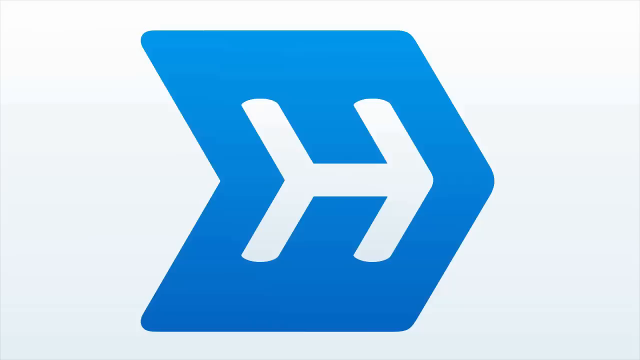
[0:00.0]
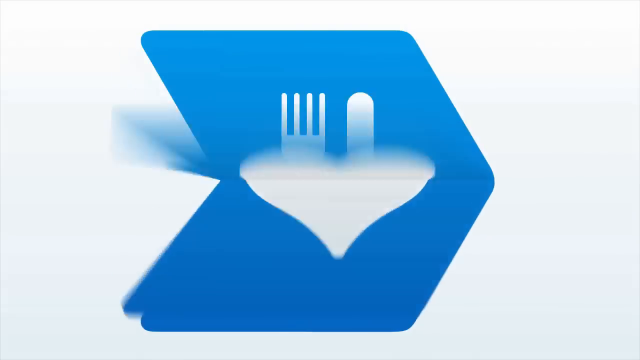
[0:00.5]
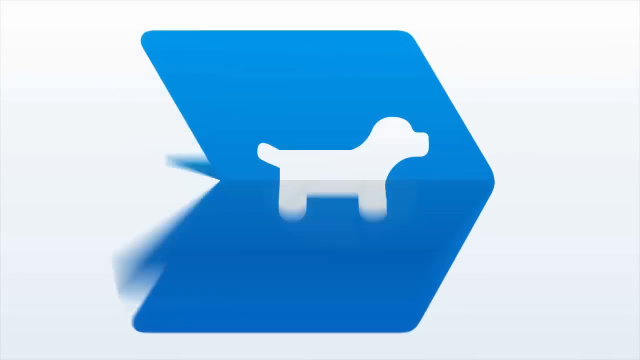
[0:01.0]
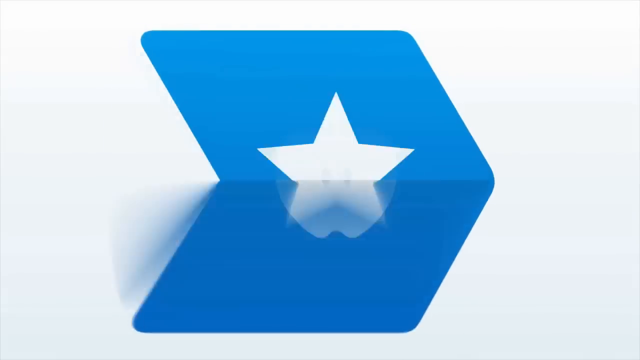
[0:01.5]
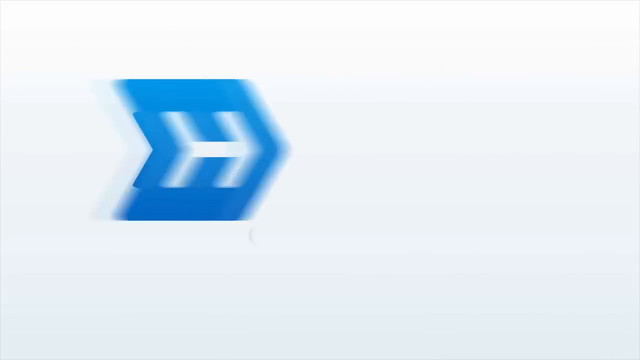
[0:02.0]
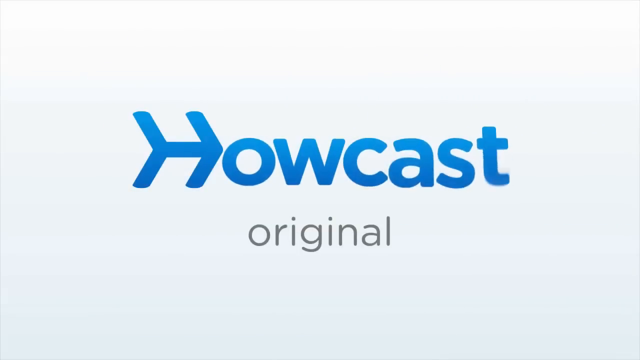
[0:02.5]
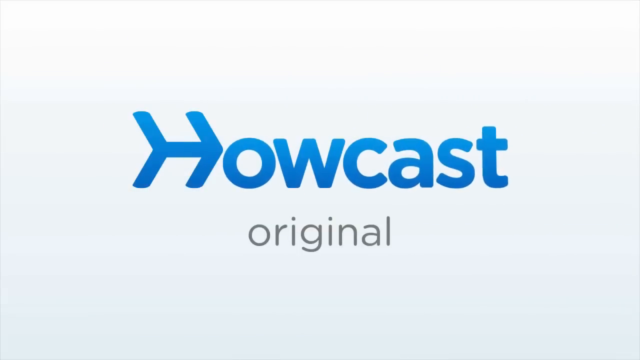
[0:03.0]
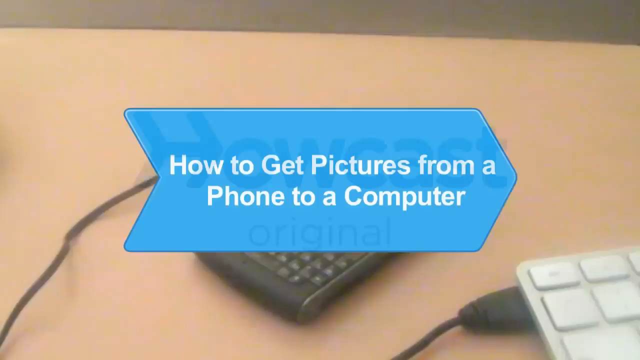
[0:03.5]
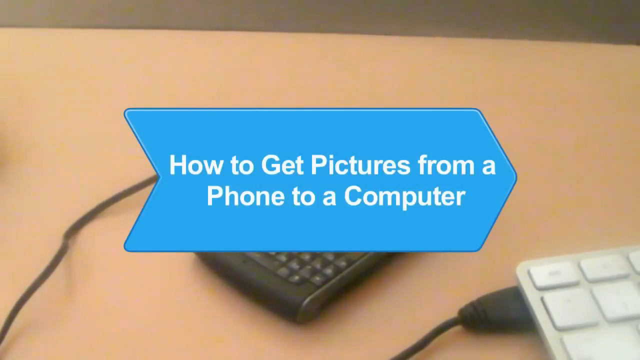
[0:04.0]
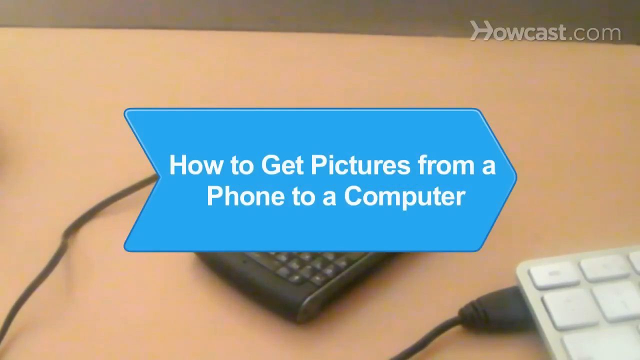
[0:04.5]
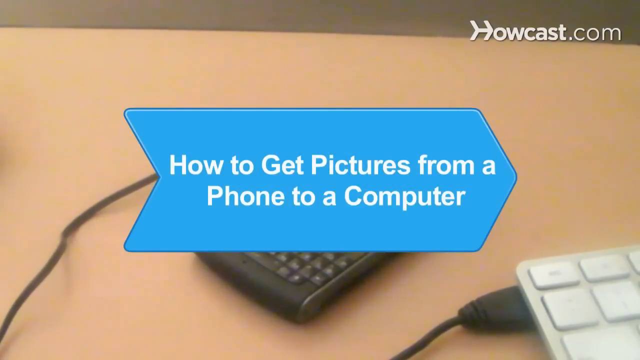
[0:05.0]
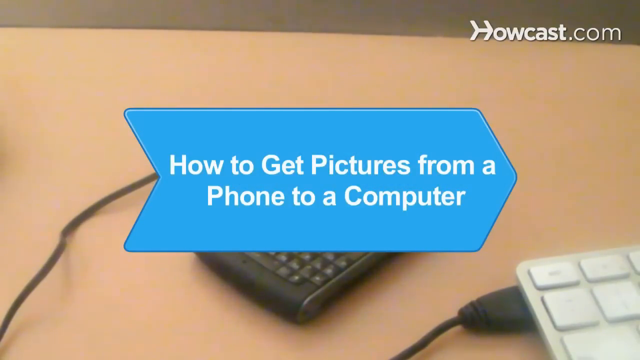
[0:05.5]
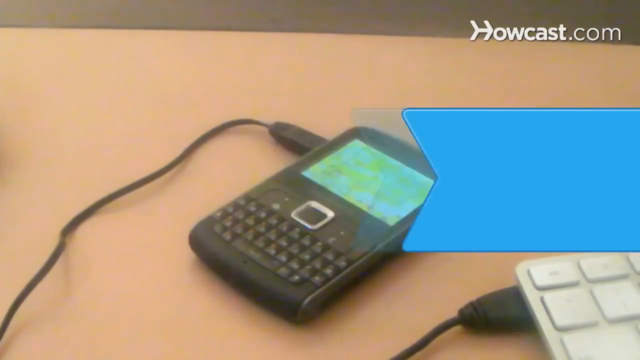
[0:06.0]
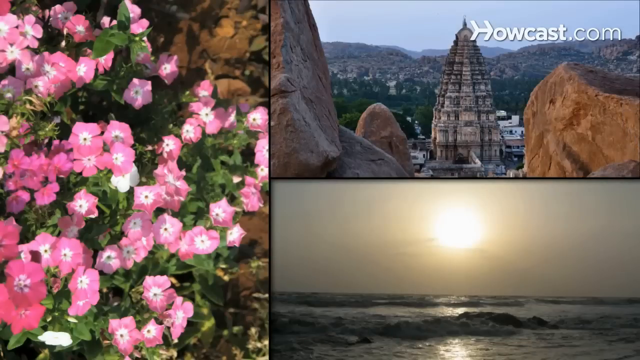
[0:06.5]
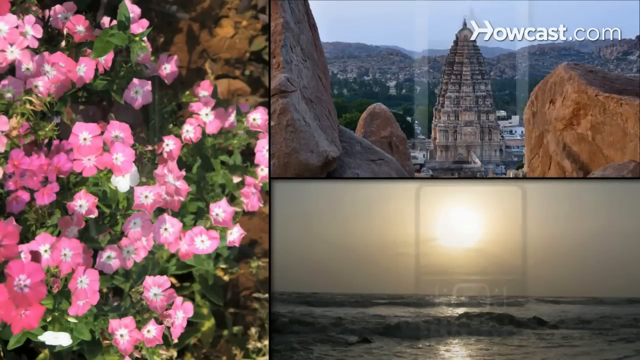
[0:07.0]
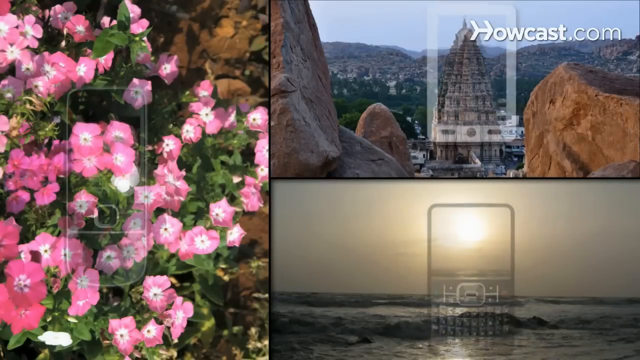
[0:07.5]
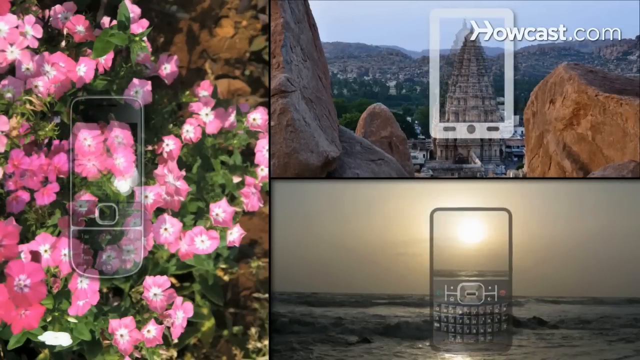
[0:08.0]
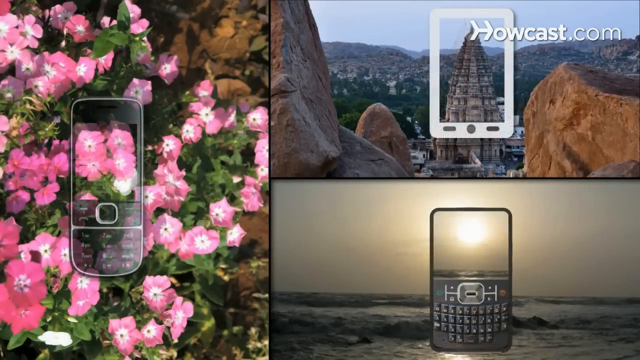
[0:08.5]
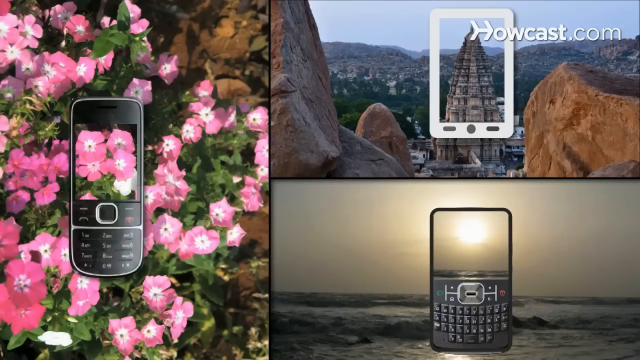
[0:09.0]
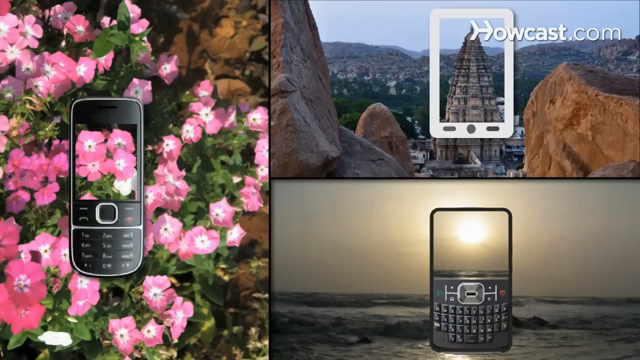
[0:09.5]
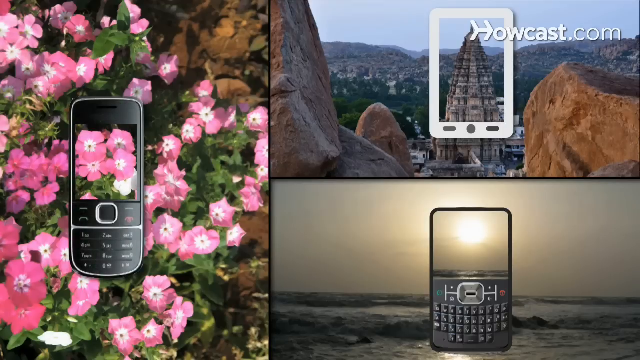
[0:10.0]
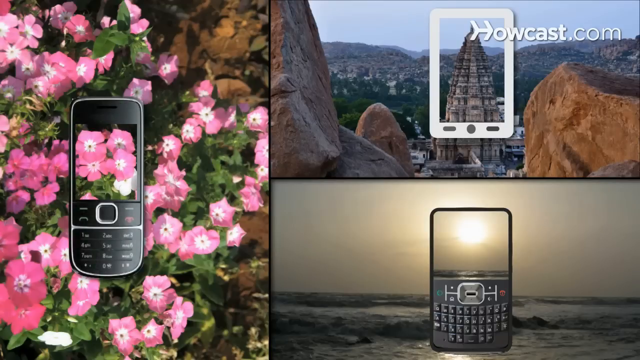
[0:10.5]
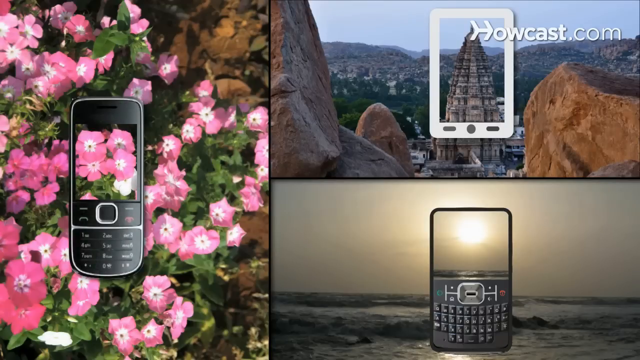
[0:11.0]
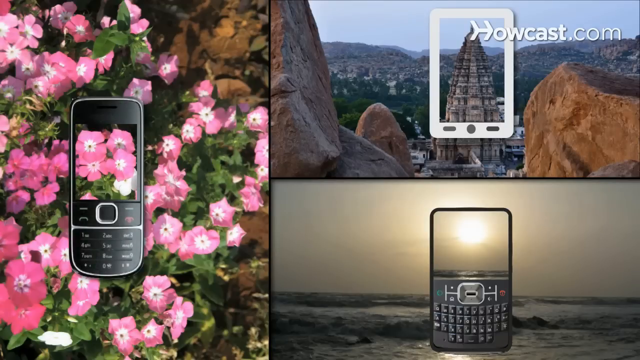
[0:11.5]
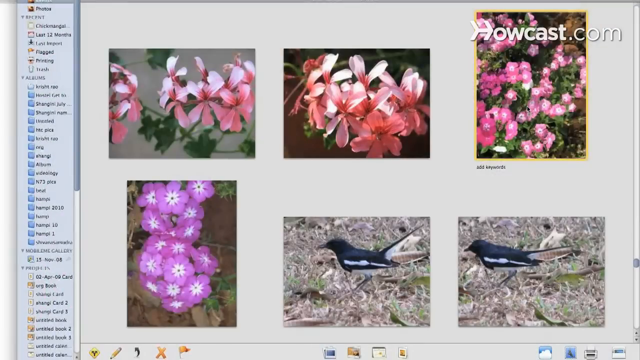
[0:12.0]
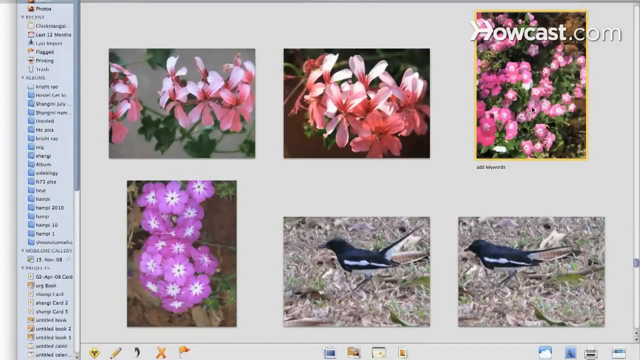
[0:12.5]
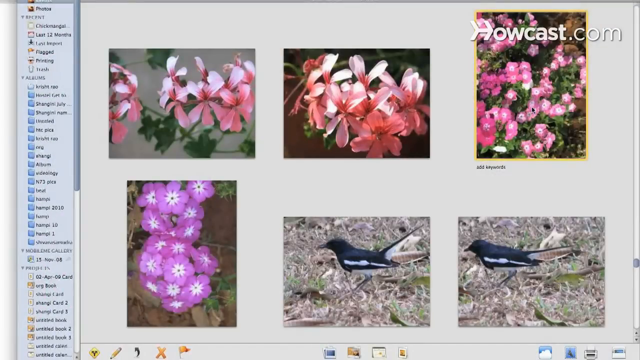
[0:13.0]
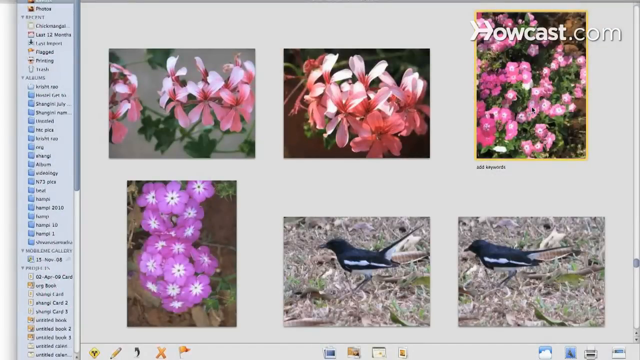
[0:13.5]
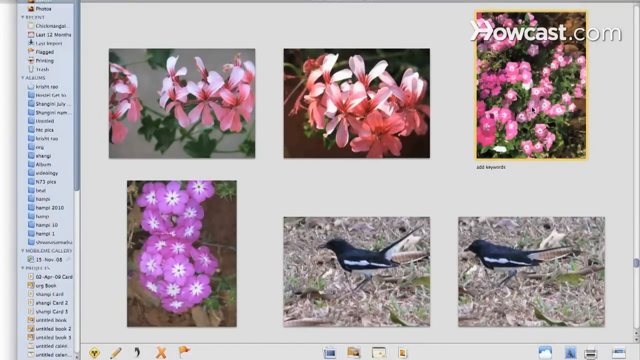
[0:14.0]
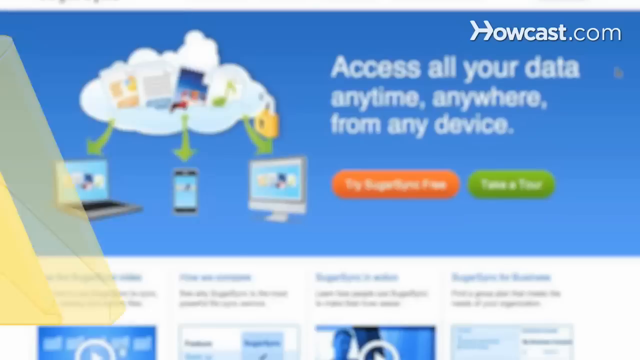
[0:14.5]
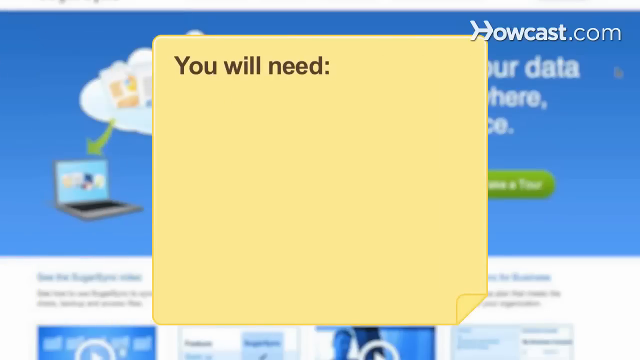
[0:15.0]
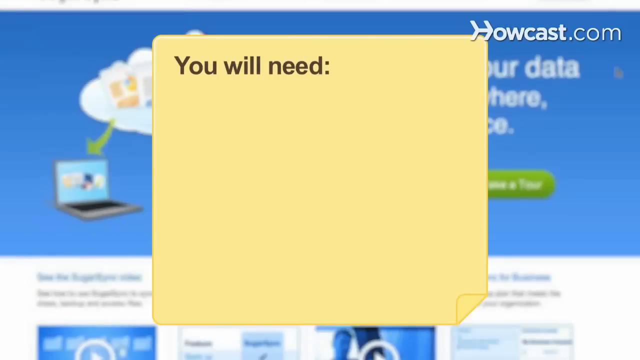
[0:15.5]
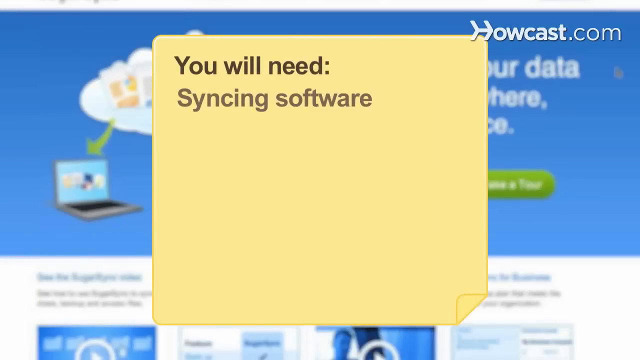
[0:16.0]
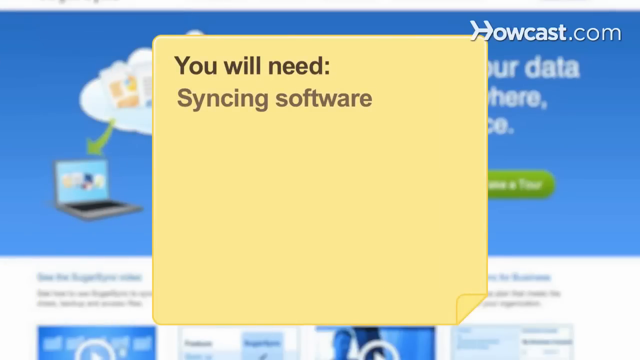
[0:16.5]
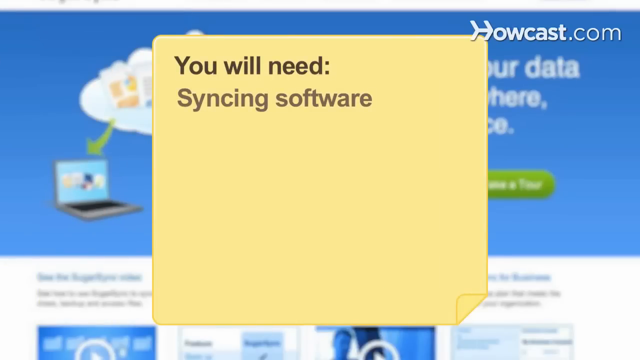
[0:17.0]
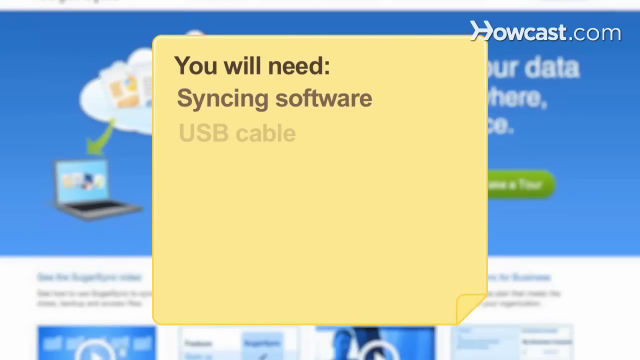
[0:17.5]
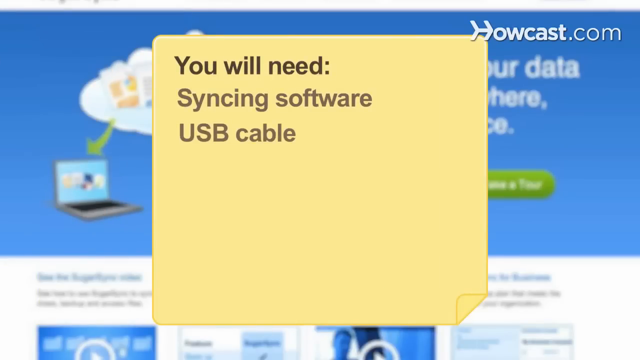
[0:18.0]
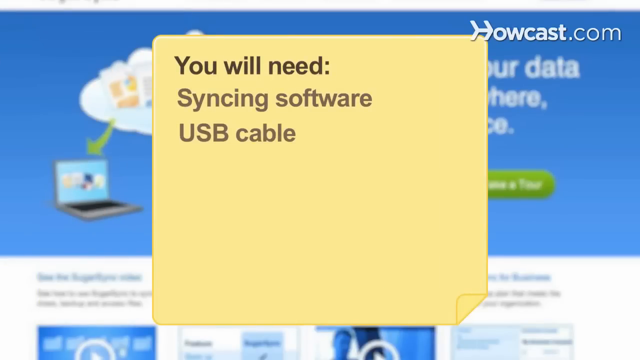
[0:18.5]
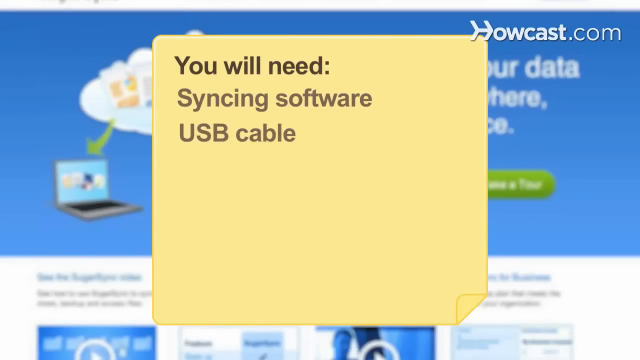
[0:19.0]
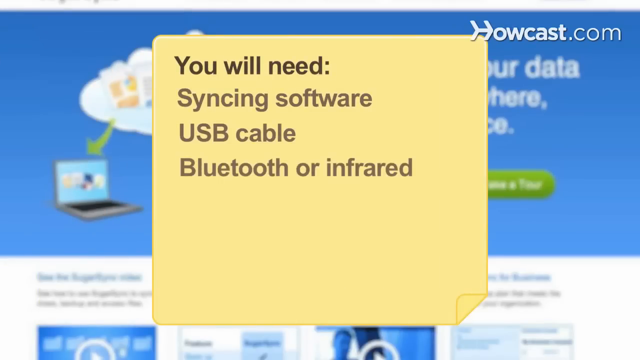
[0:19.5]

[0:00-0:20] Many blue, icon-like symbols appear and quickly move over one another, forming an introduction to the HowCast Original logo. A blue message in the form of an arrow pointing right reads "how to get pictures from a phone to a computer," introducing what appears to be a tutorial. A phone is shown connected by cable to a computer, followed by many phones containing photos of different places, and then the inside of a folder on the PC holding photos, maybe ones the user got from the phone. A yellow square like a note appears with black lettering telling the viewer they will need syncing software, a USB cable, and Bluetooth or infrared.